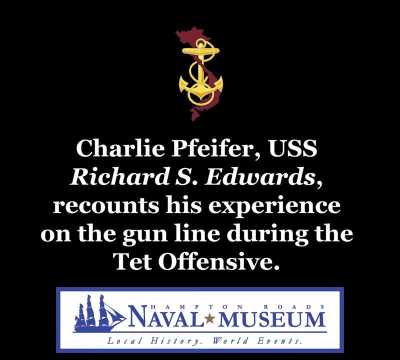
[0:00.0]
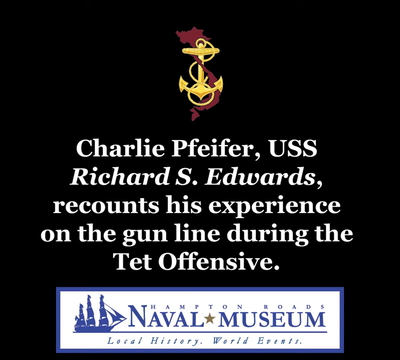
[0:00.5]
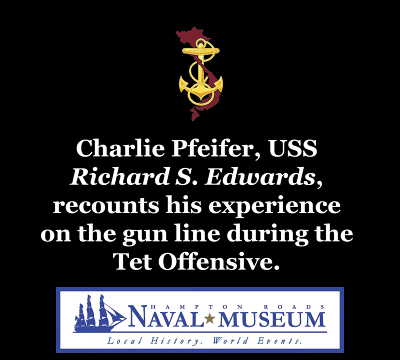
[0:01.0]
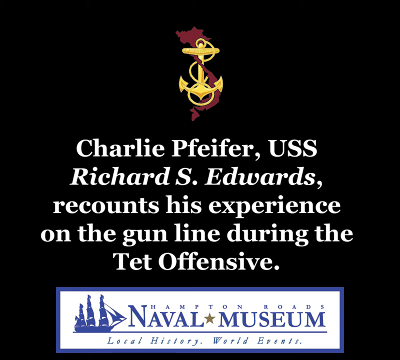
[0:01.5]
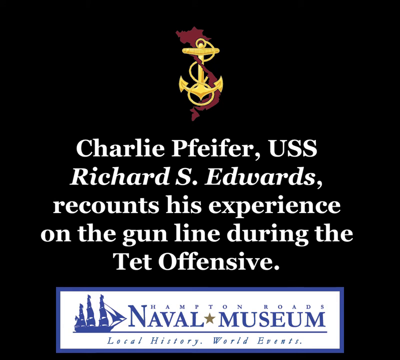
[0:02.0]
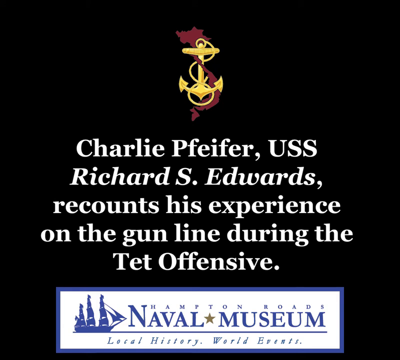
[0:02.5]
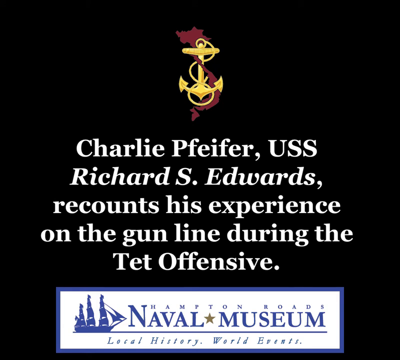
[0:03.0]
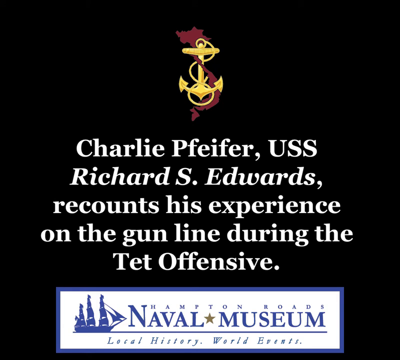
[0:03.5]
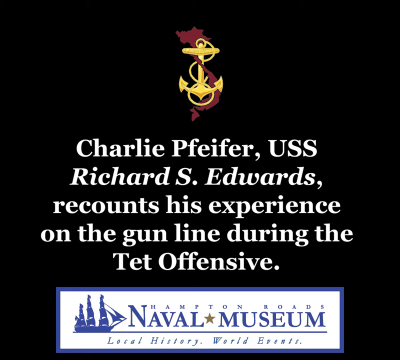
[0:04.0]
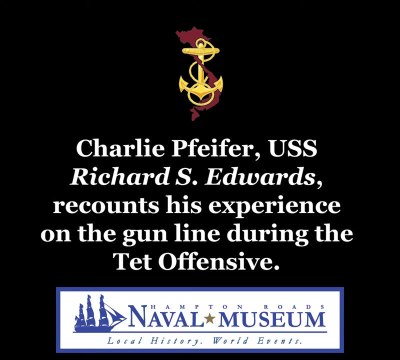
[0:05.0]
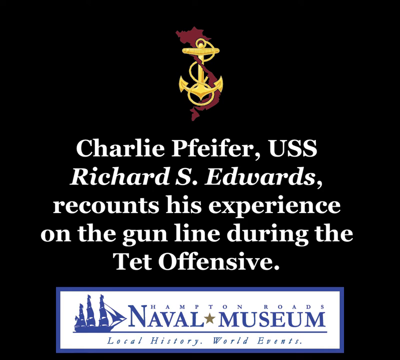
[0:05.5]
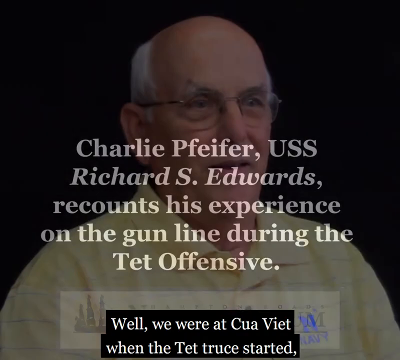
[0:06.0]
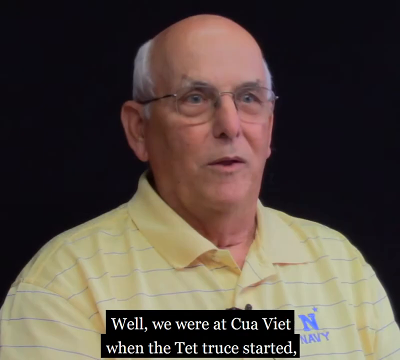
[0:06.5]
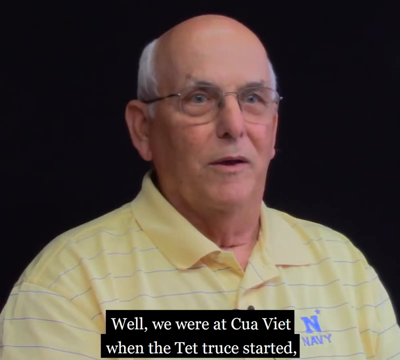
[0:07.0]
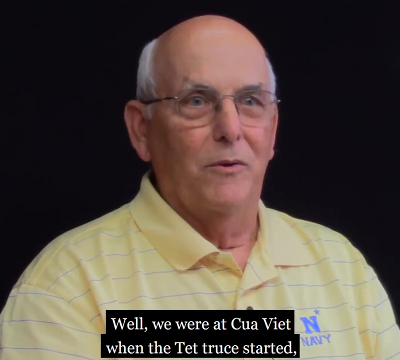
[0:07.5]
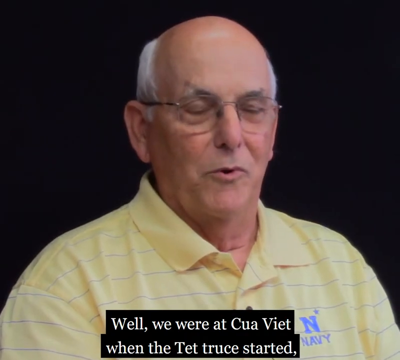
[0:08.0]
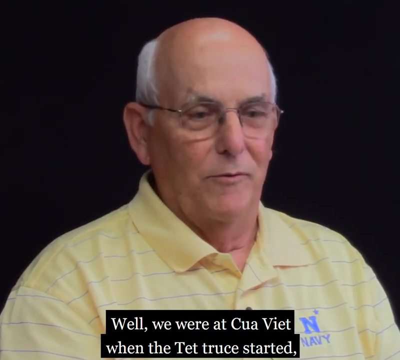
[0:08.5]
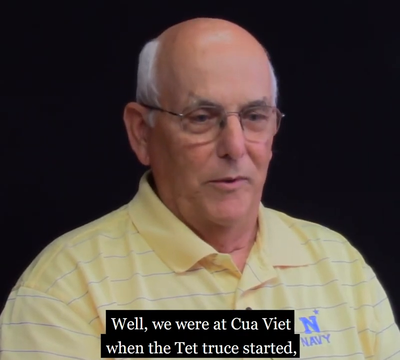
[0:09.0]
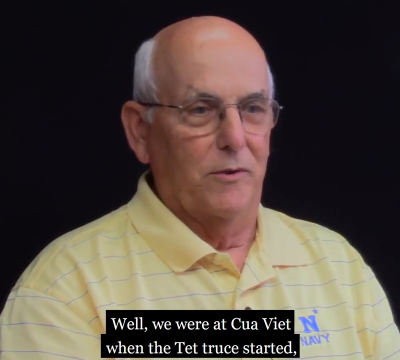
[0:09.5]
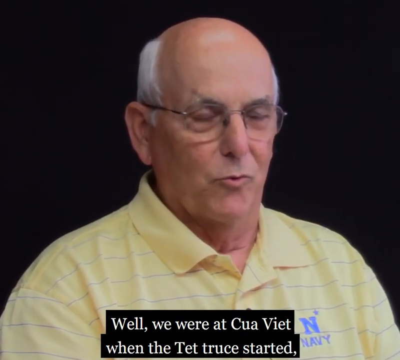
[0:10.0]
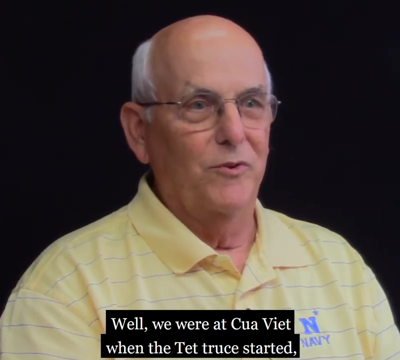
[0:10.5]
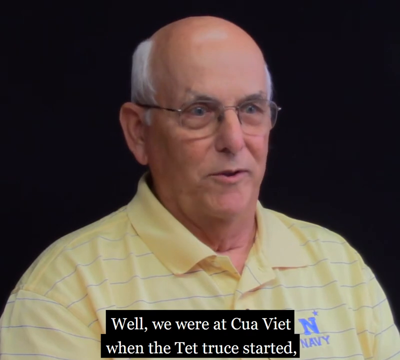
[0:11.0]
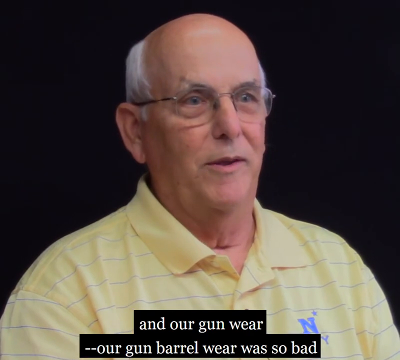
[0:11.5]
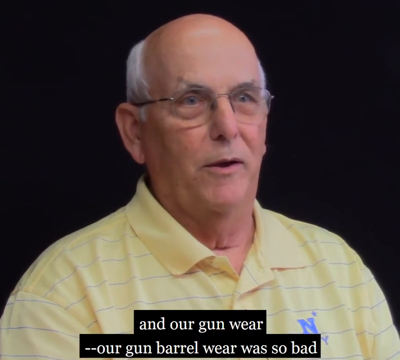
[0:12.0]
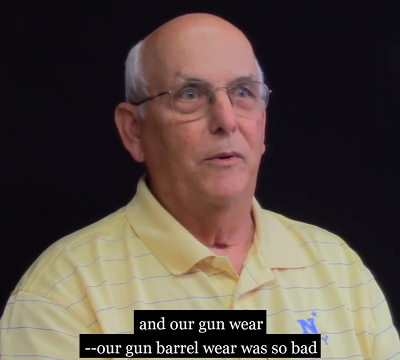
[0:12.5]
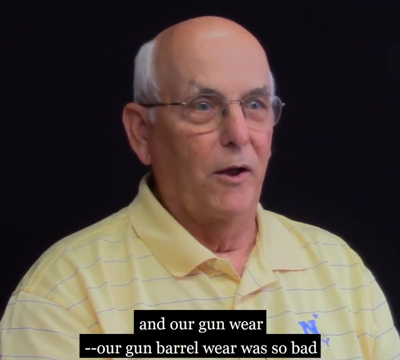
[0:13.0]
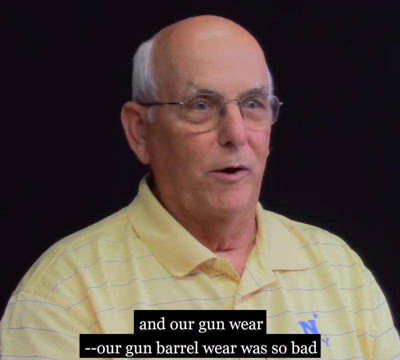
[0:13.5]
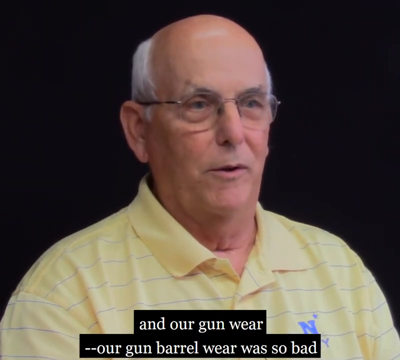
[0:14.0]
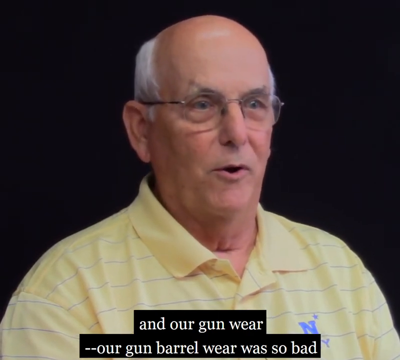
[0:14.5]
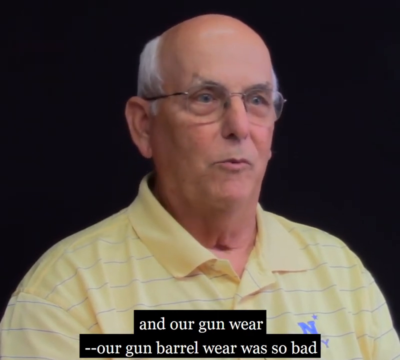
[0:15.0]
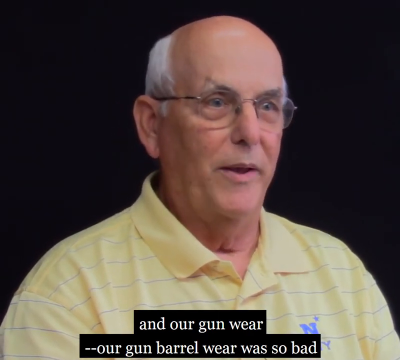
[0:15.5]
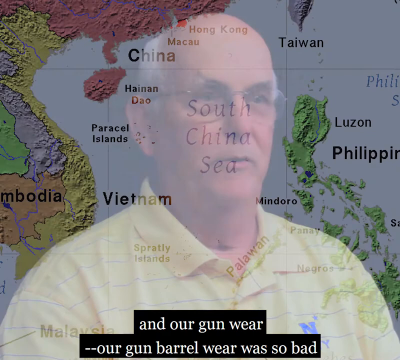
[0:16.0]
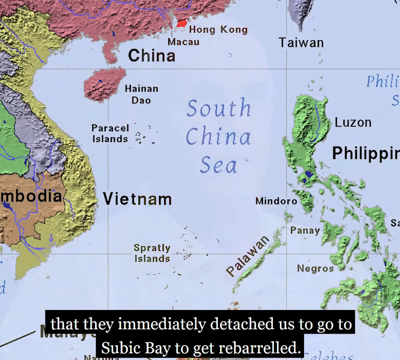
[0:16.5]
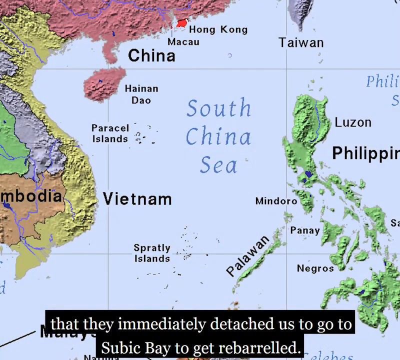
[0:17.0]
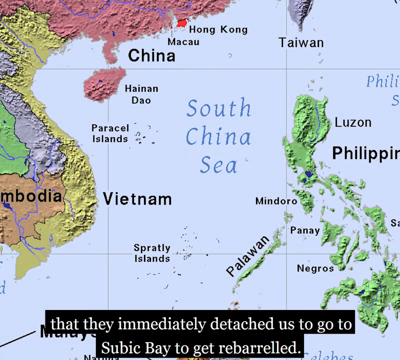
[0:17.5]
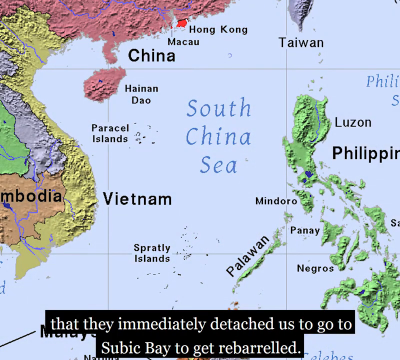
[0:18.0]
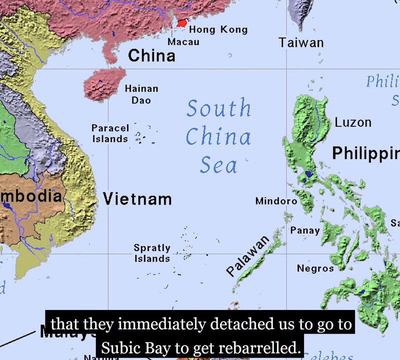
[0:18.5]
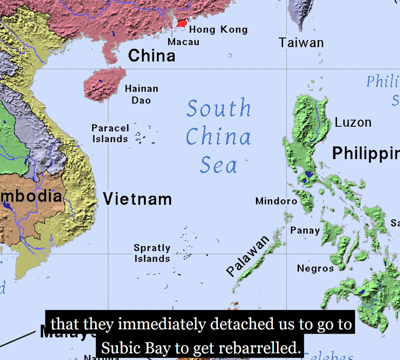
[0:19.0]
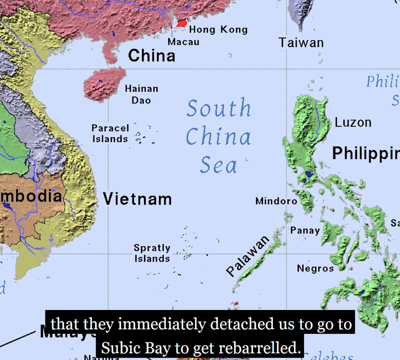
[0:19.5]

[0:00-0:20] Against a black background is a yellow anchor with a red lining wrapped around it. White lettering below reads "Charlie Pfeiffer, USS Richard S. Edwards, recounts his experience on the gun line during the Tet Offensive." Just below that is a blue-outlined banner with a white background; the words at the bottom, in black and blue, read "Hampton Roads Naval", followed by a gold star and "Museum", with a blue lining underneath. Next, against the same black background, appears an older white man who is bald with white hair on the sides, wearing black-rimmed glasses and a yellow and blue lined collared shirt. A black box beneath him shows white lettering reading "well we were at Cua Viet" as he keeps talking, followed by "and our gun wear". The image then changes to a map, with white lettering underneath reading "that they immediately detached us to go to". The map labels the South China Sea in blue font, and black lettering names the countries: China at the top left, Taiwan to the right, Cambodia, Vietnam, and the Philippines, with the Philippine islands in green on the right side. The water is blue.